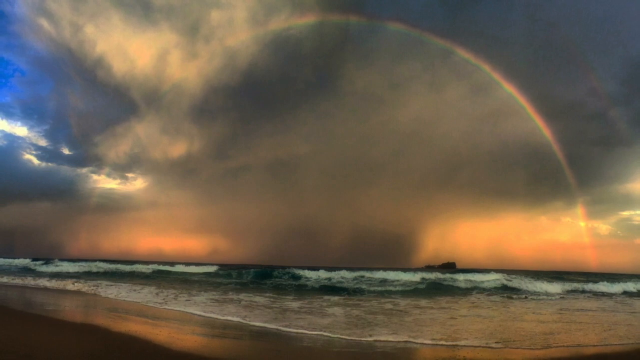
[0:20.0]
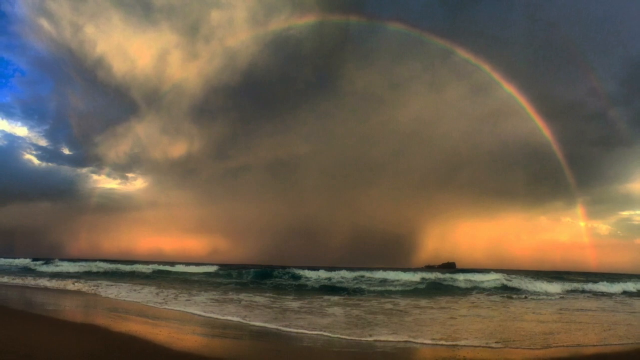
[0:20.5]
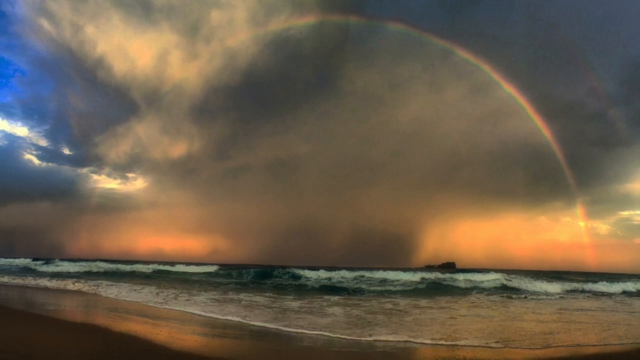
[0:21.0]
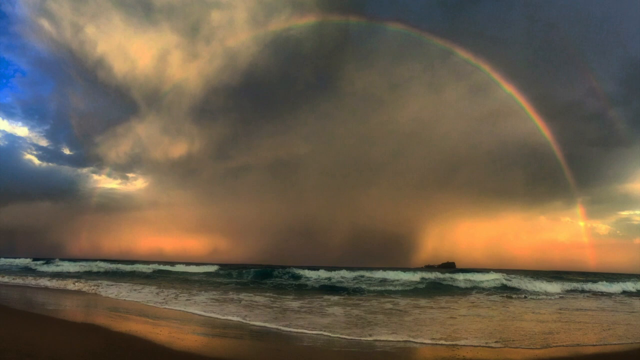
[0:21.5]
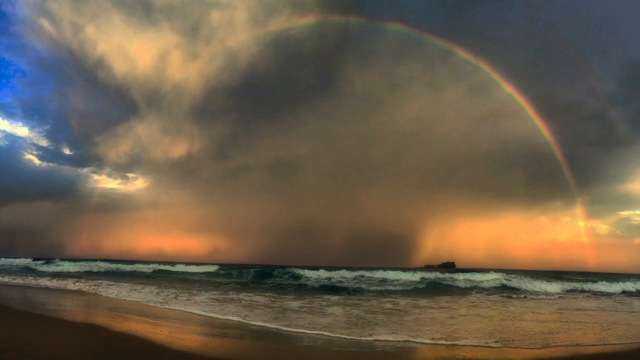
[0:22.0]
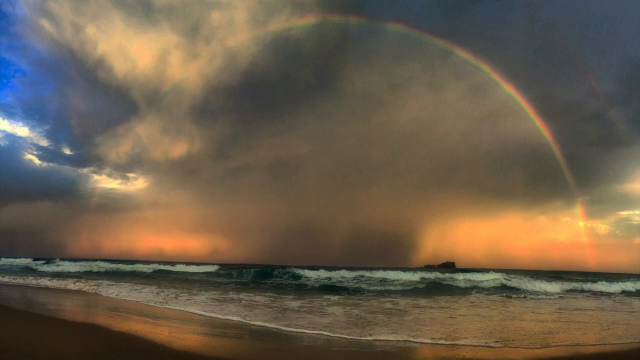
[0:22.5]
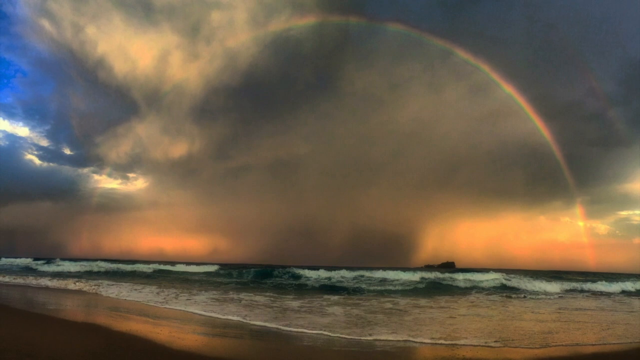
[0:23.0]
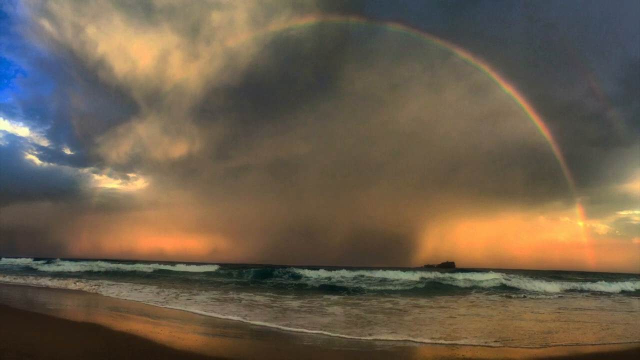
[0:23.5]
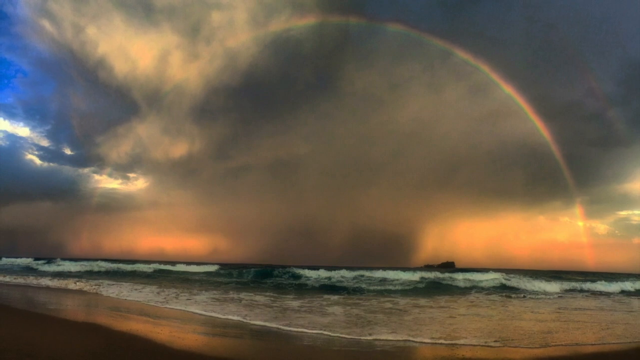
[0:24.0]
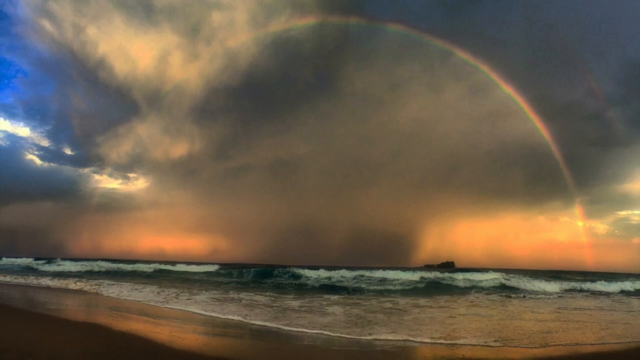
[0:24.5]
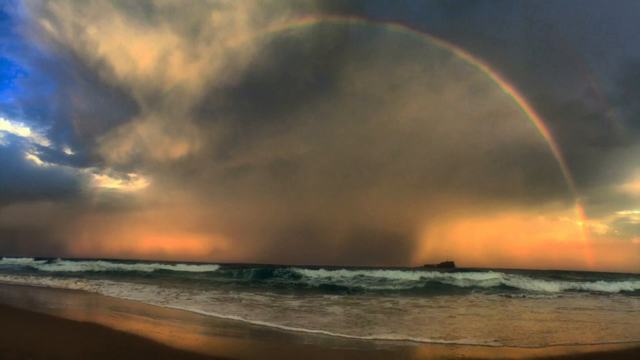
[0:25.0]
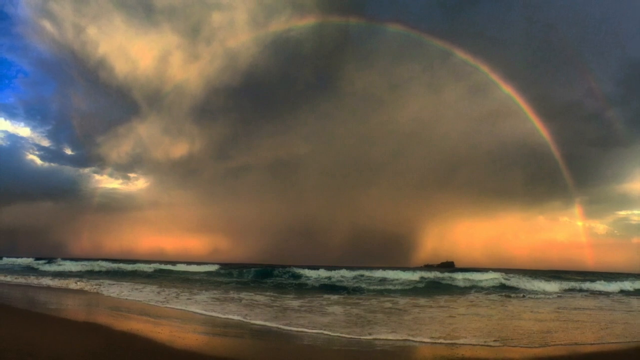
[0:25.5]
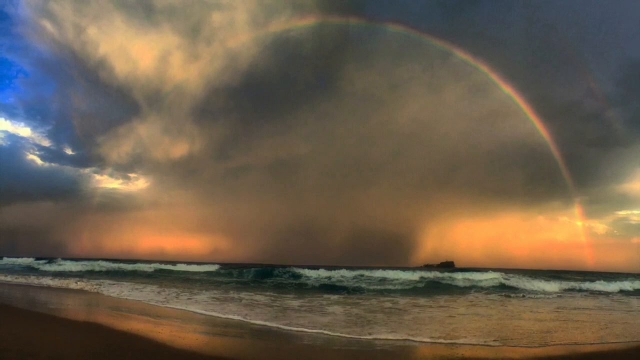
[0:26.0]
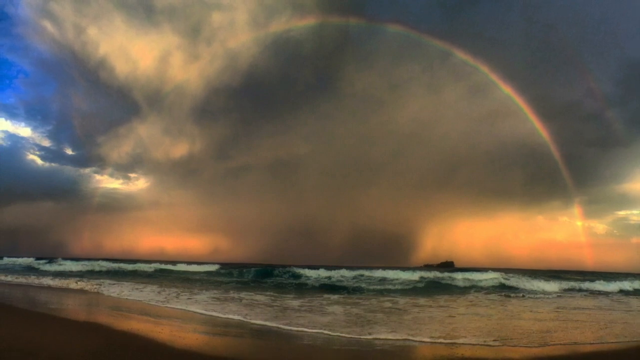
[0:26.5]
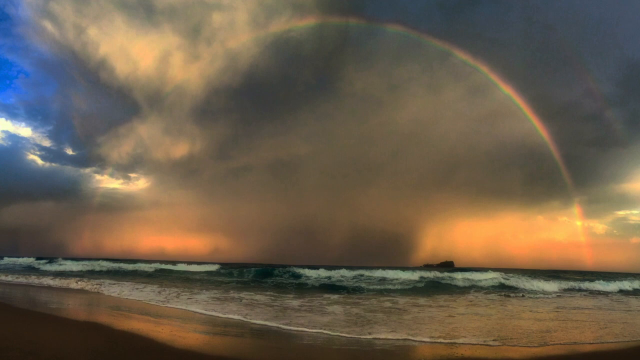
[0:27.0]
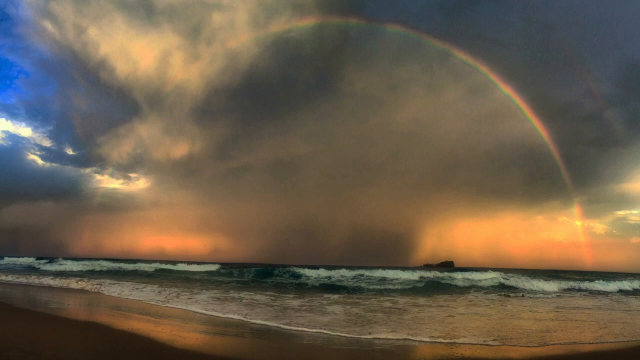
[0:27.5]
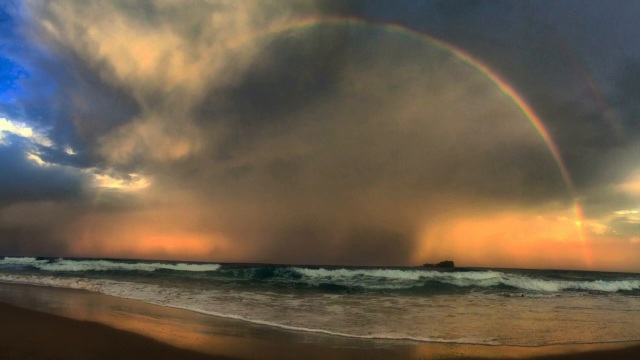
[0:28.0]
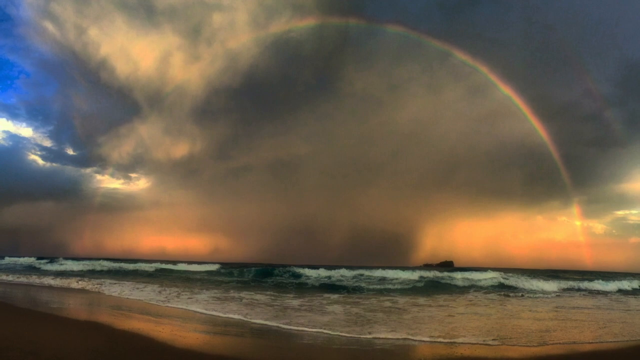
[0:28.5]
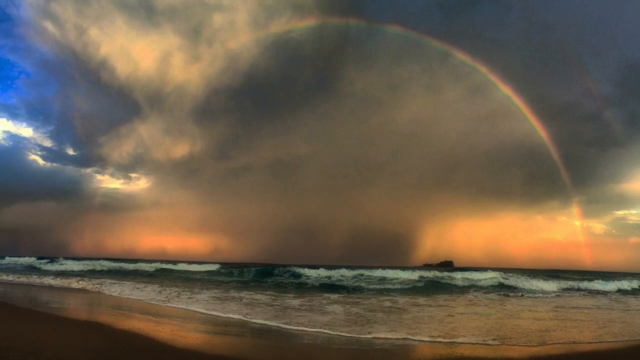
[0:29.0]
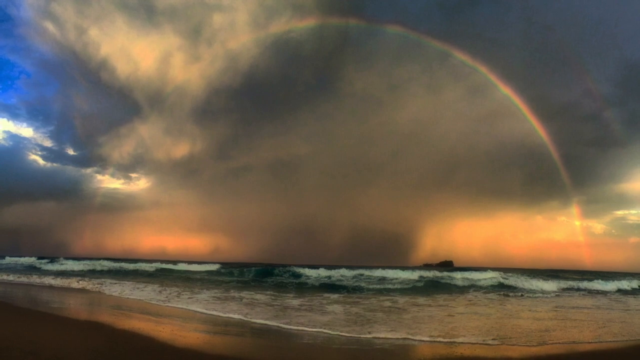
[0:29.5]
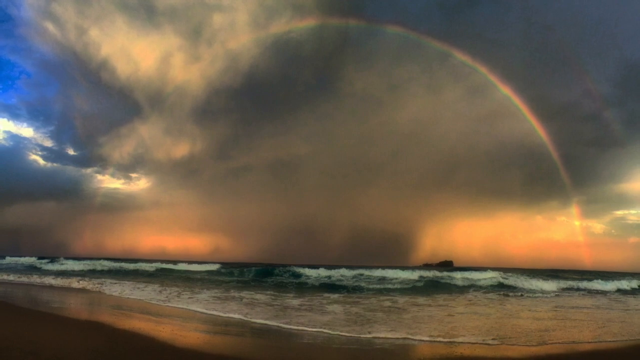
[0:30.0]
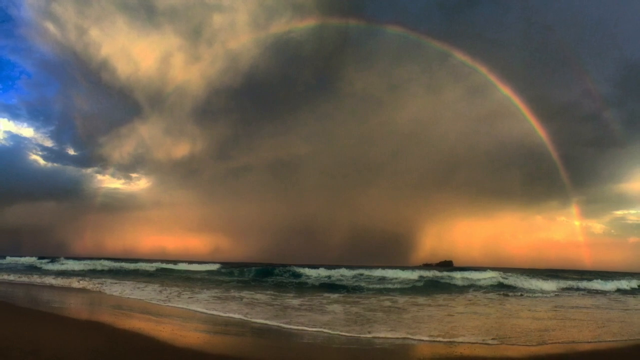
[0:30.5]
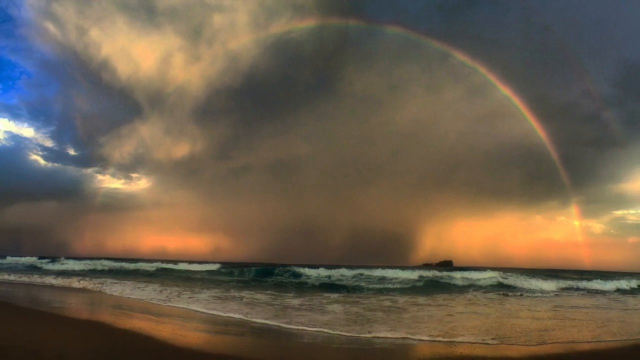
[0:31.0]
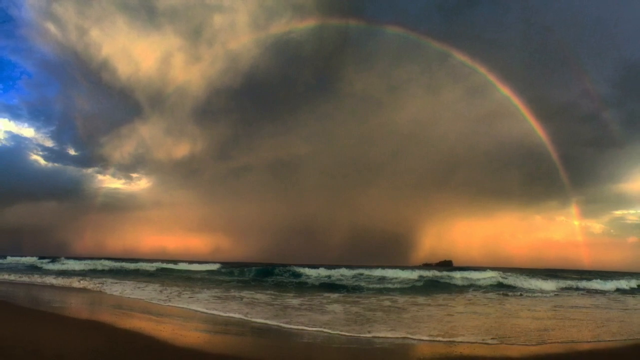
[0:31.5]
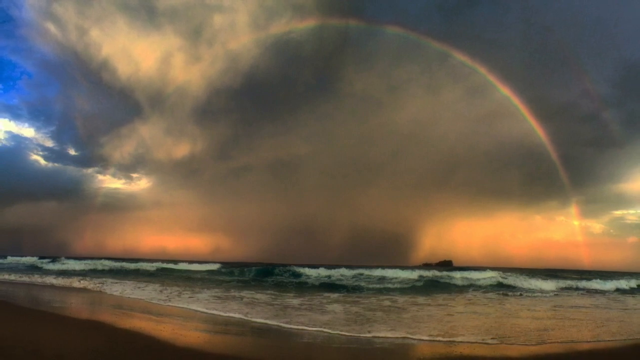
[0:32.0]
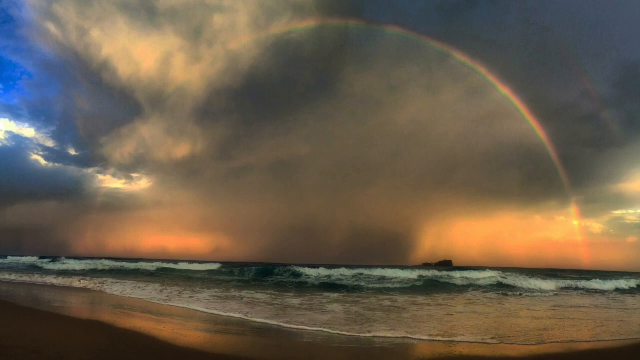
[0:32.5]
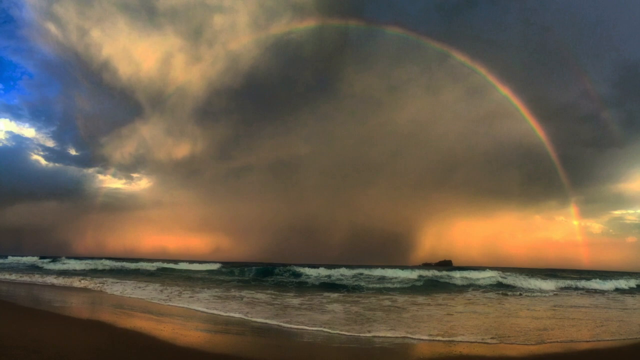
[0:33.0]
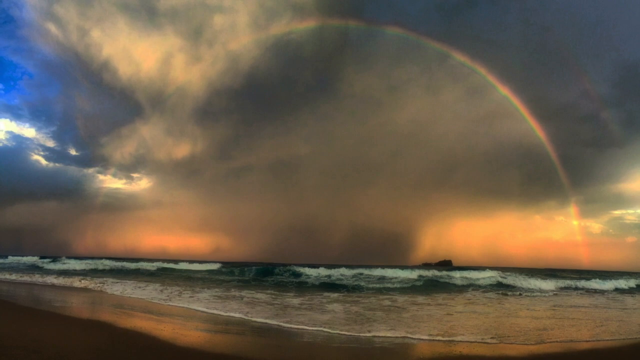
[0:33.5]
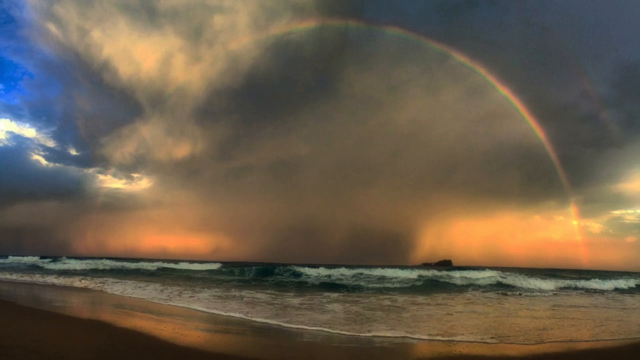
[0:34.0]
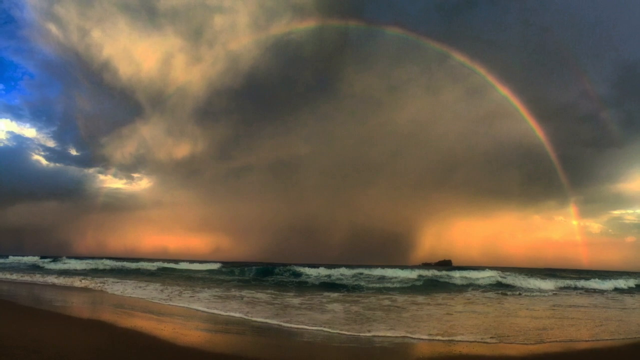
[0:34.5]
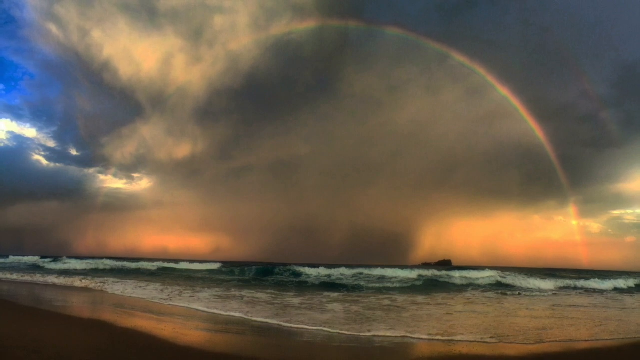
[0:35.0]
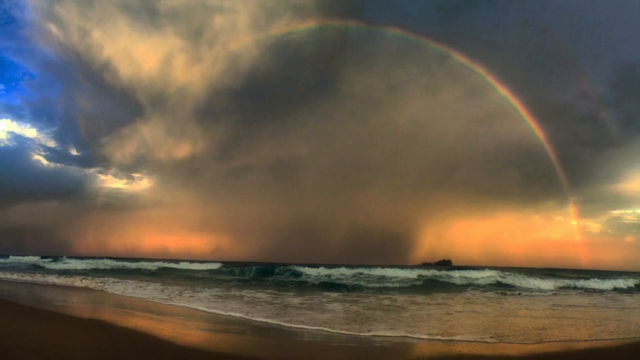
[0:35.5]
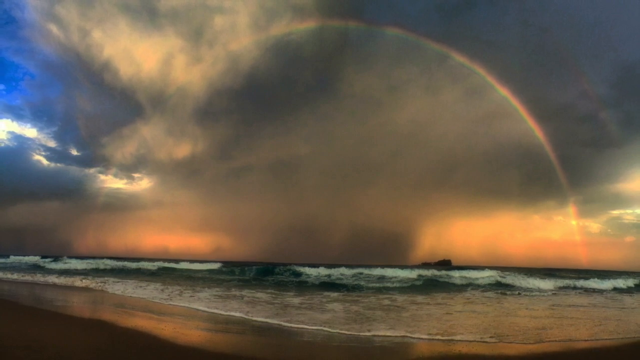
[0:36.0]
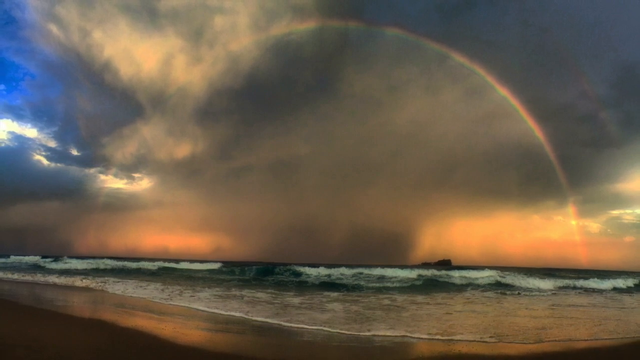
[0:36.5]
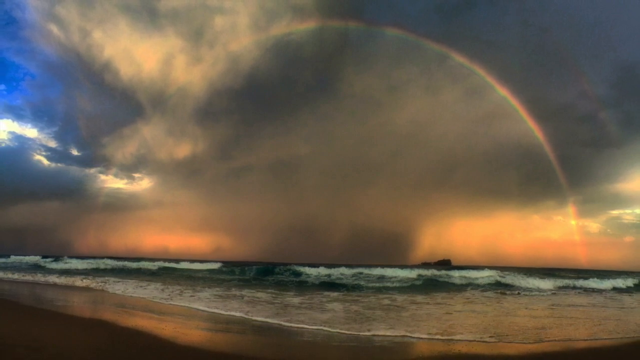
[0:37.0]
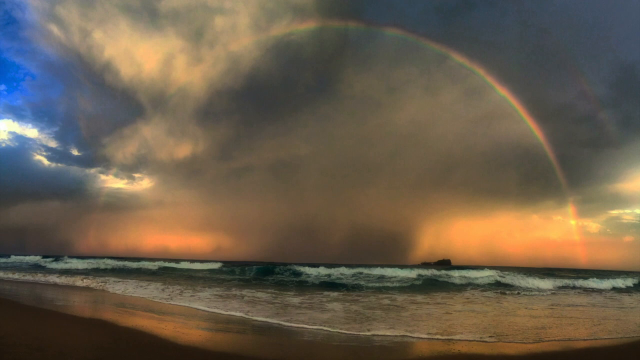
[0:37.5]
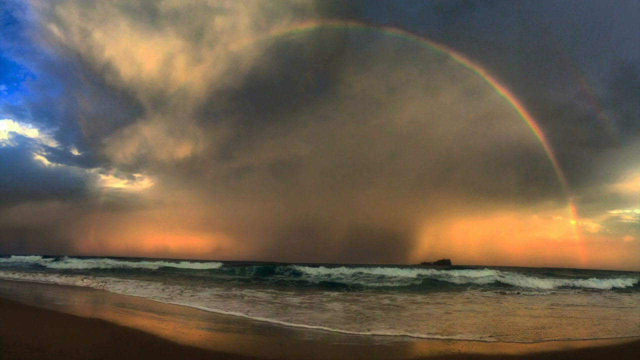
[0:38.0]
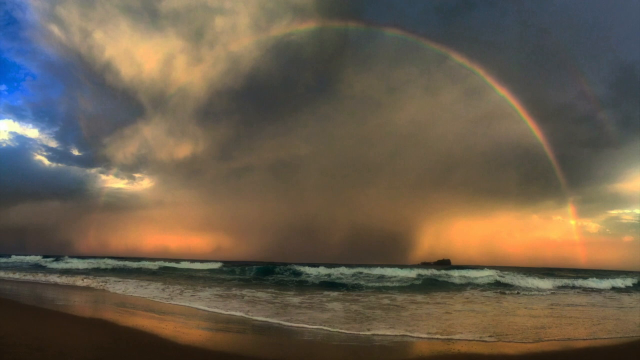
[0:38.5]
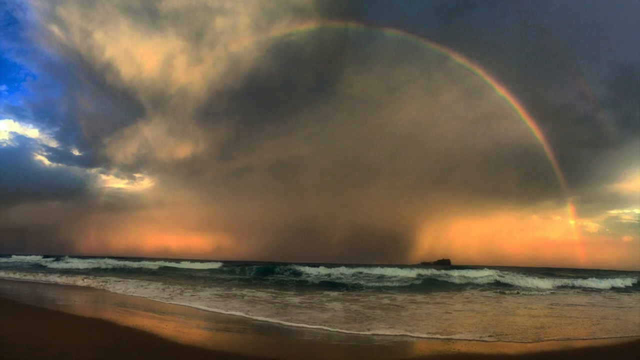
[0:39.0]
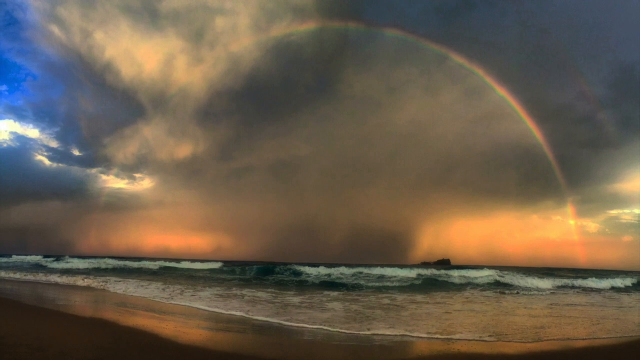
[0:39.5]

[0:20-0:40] A beach and ocean scene. Sand fills the foreground, and at its edge the tide is beginning to come in, shallow at first. Further out, a fairly large wave, two or three feet tall, is just beginning to break in white on the left and far right sides of the screen as it reaches the shore. Beyond that is more ocean, and on the right what looks like a small island is visible. The horizon is pink and red. In the center, a large gray area that looks like a wide water spout rises from the sea. Above it the clouds are gray and then backlit gold by the sun. In the upper left-hand corner there is blue sky with white clouds below. A perfect rainbow is centered across the horizon from end to end, its red, yellow and green colors clearly visible.